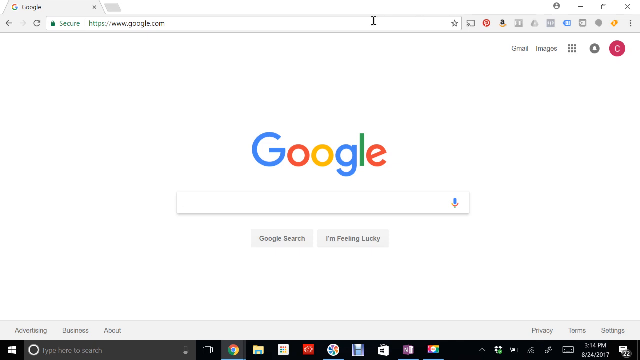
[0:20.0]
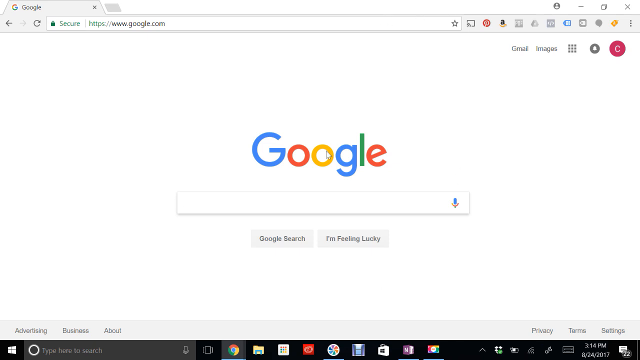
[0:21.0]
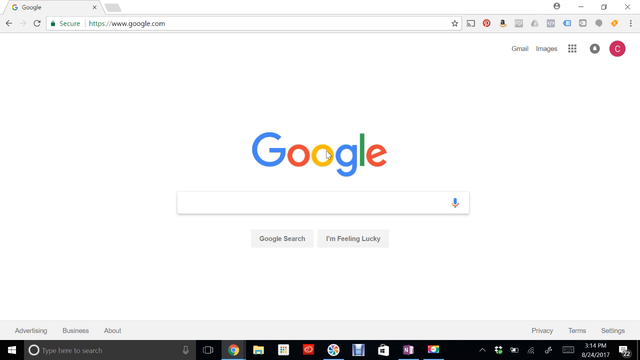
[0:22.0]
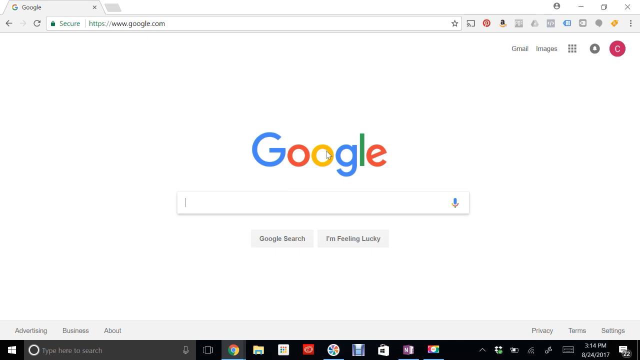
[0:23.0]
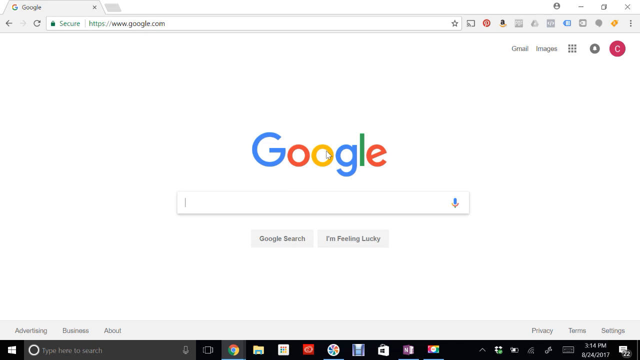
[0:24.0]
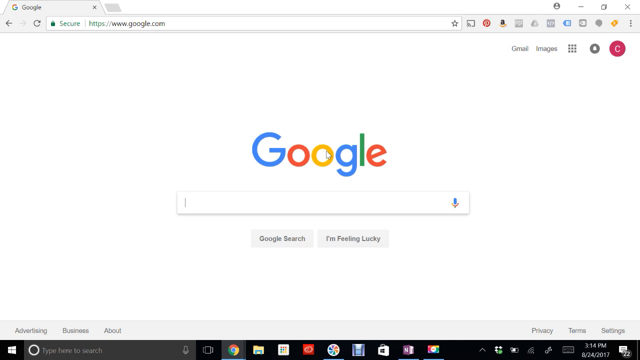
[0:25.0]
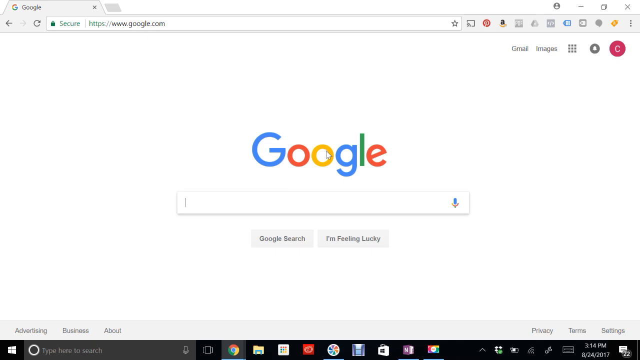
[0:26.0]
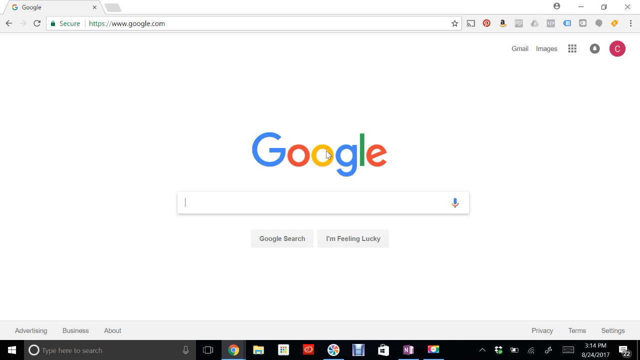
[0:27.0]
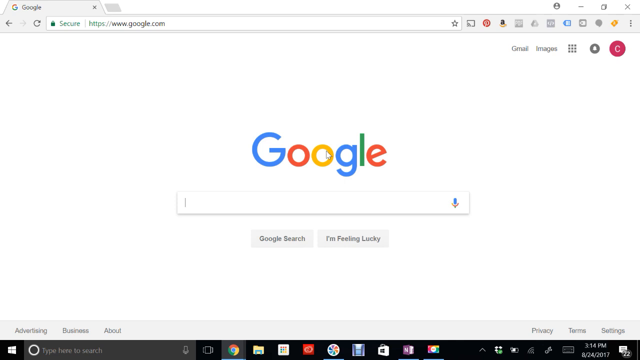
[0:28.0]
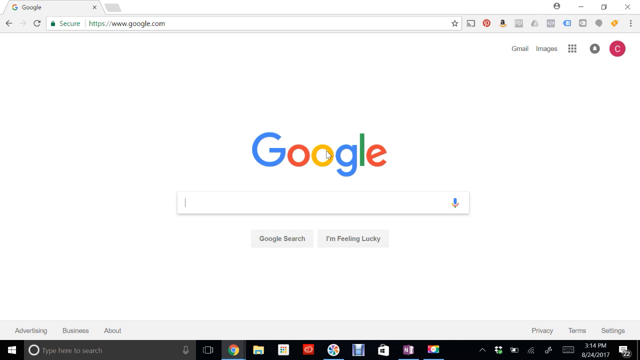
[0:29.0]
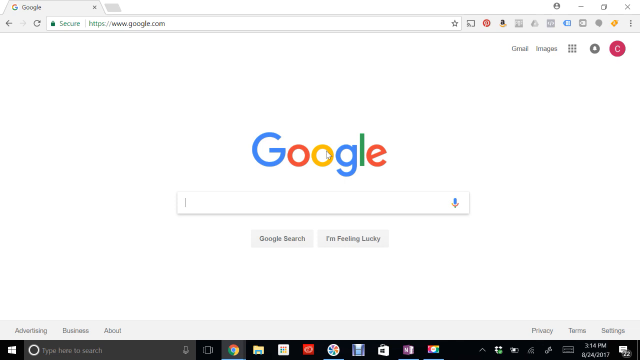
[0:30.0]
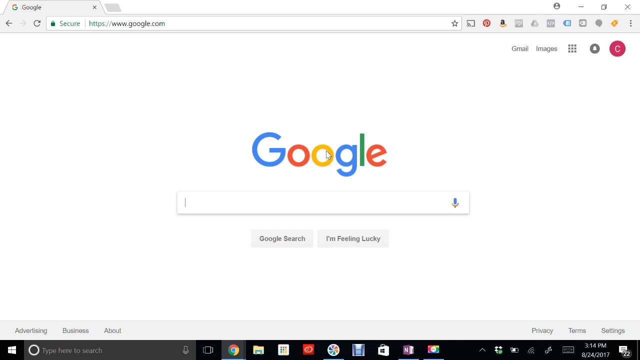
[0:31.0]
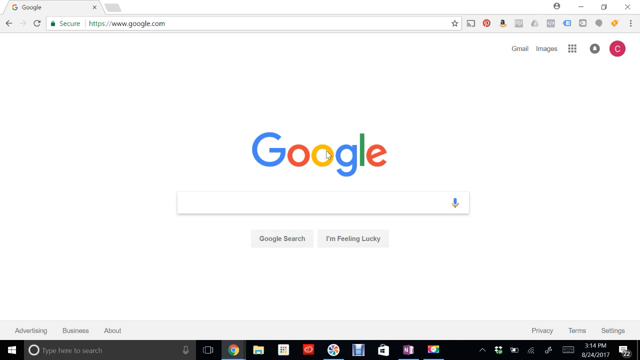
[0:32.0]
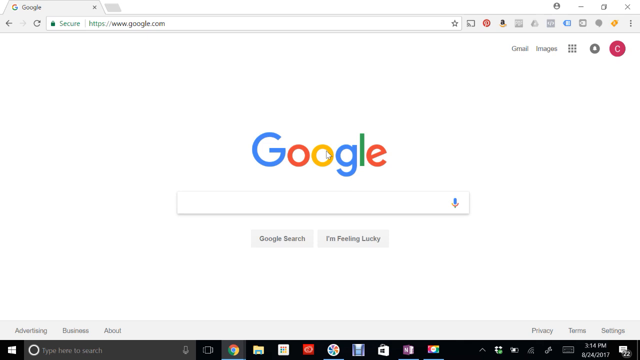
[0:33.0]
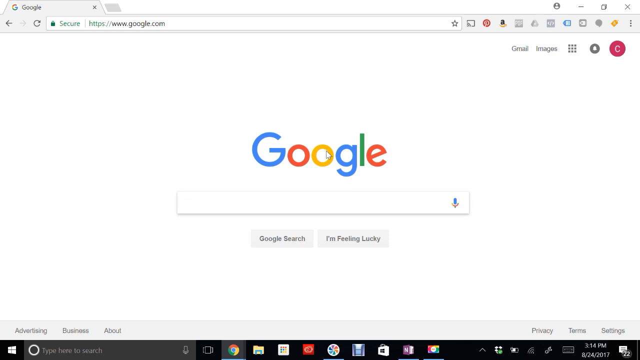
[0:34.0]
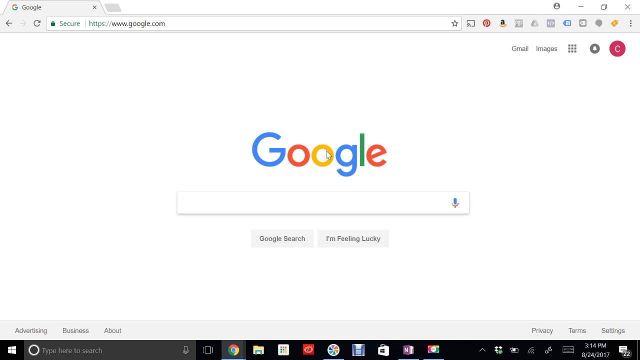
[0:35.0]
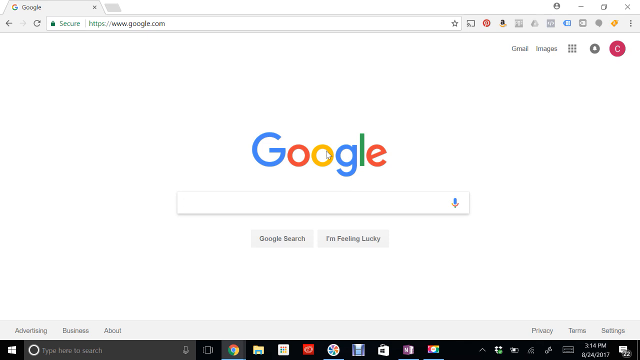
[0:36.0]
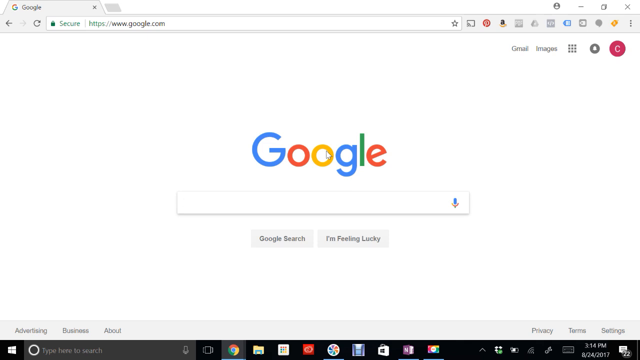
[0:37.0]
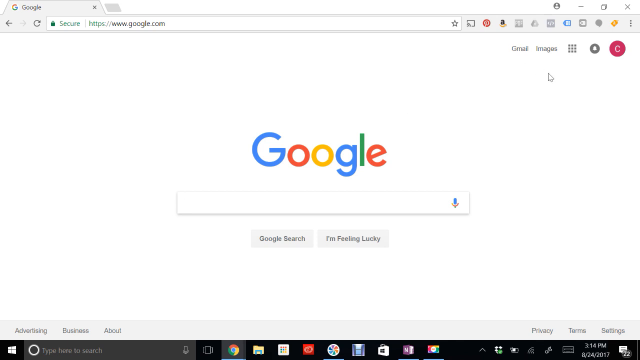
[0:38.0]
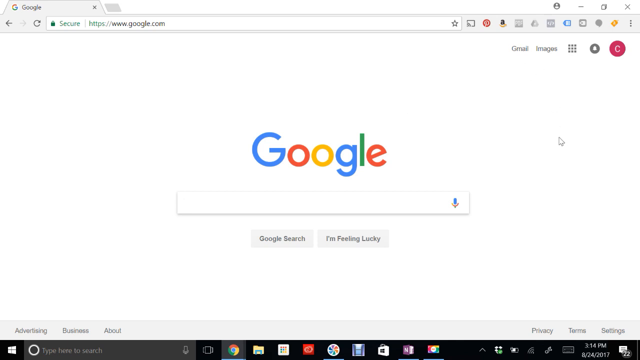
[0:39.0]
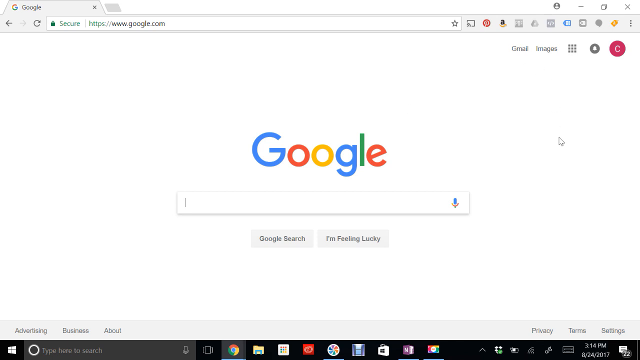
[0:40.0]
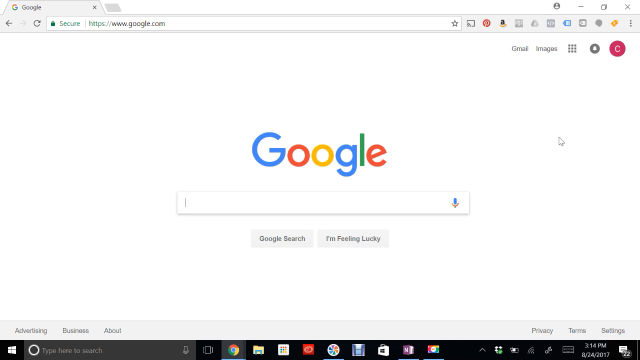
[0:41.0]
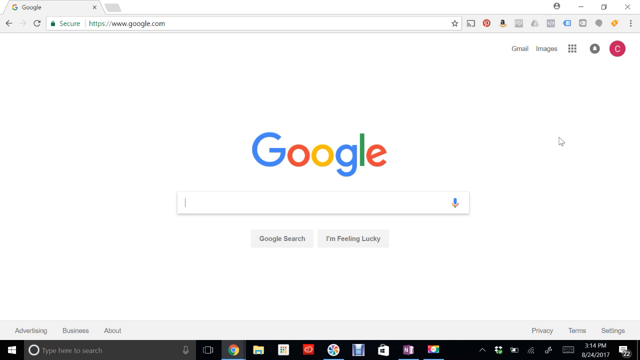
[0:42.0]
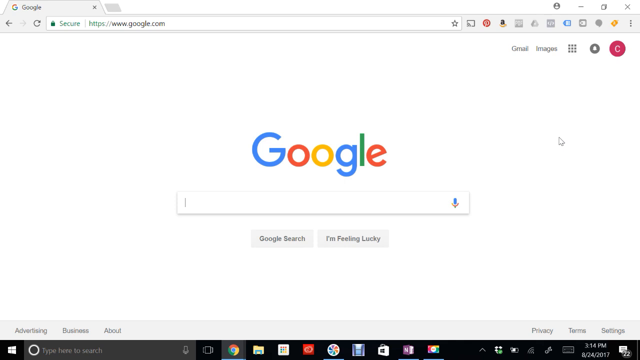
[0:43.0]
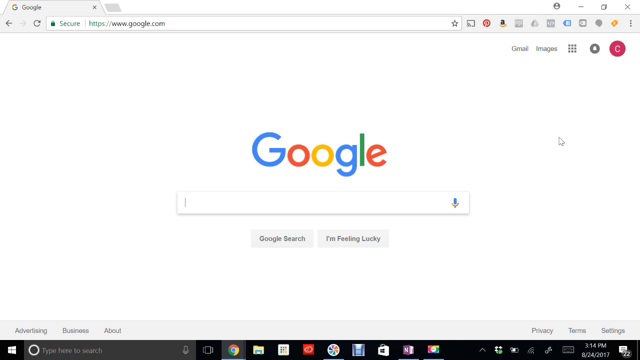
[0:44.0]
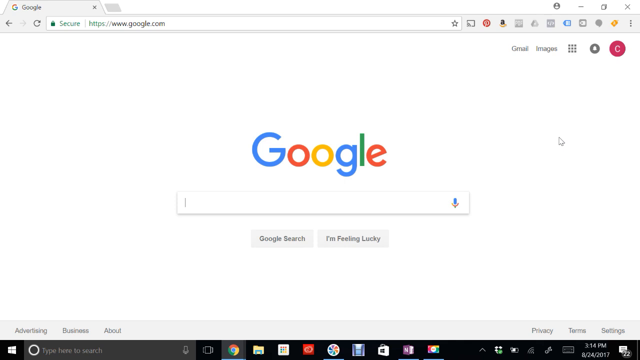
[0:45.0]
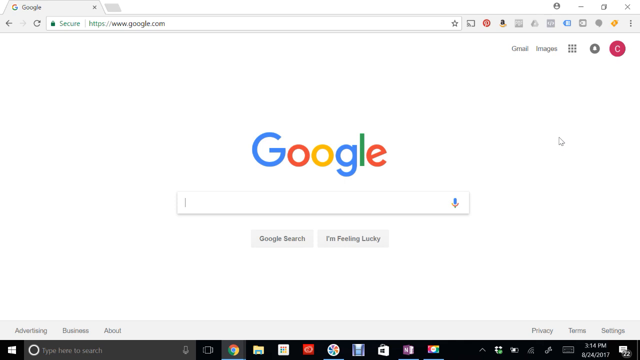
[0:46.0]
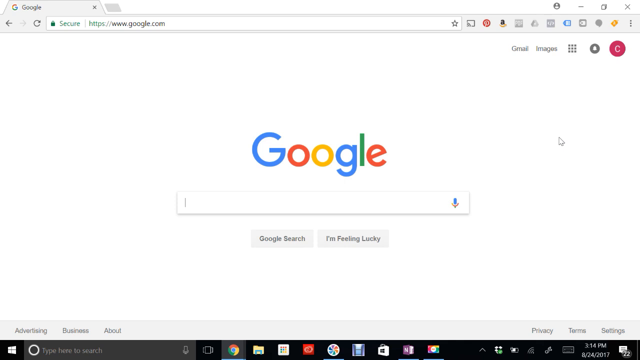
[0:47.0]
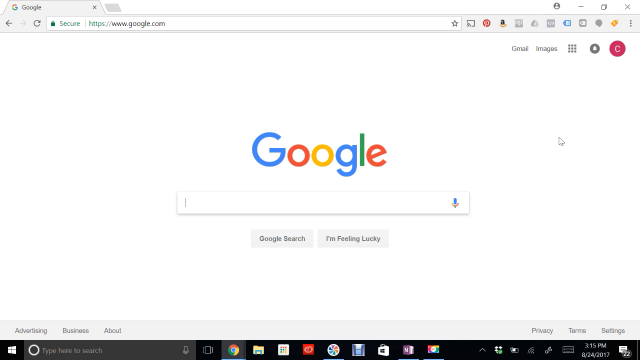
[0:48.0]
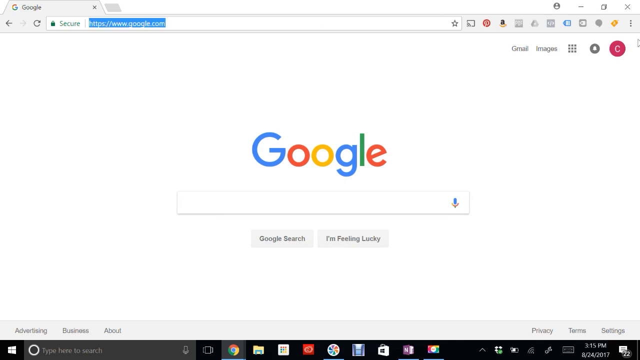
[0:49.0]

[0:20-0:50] The blank Google search page remains on screen, with a cursor blinking in the search box. For quite a long while the mouse cursor does not move and the blinking cursor is the only action. Eventually the cursor moves around a little. Someone then goes to the URL bar and clicks it, highlighting the text there, but nothing else happens.